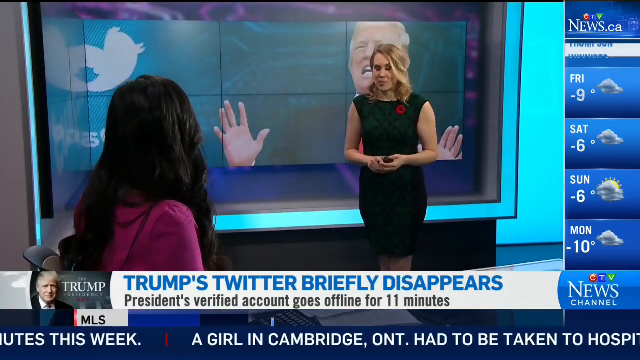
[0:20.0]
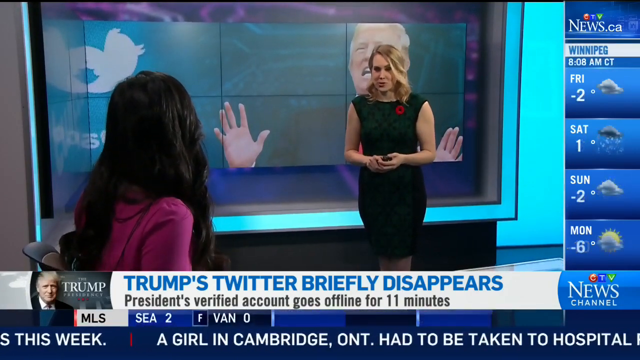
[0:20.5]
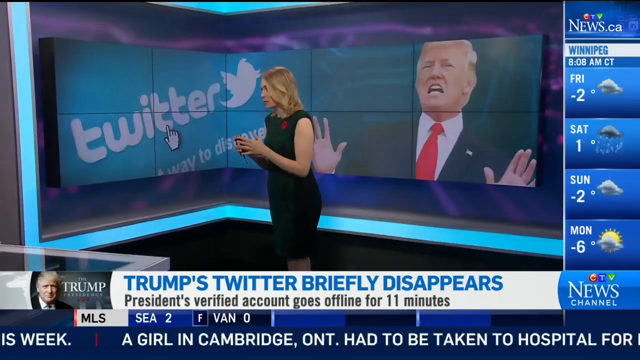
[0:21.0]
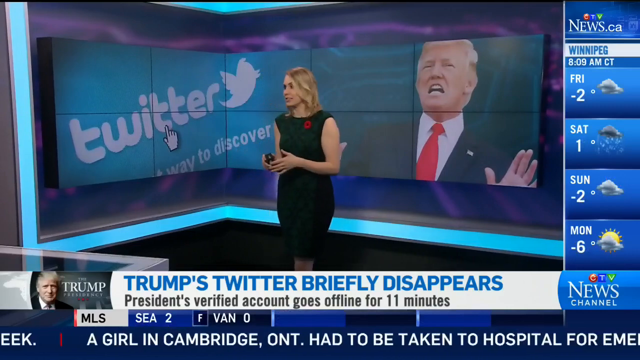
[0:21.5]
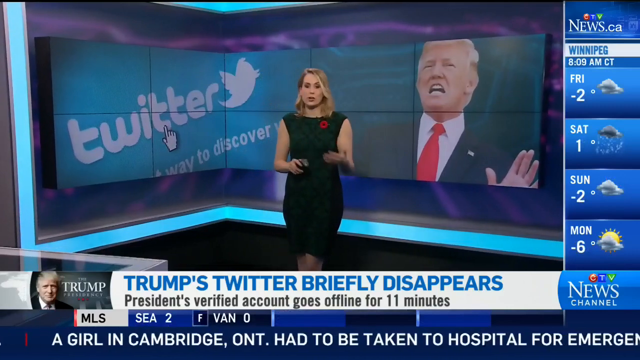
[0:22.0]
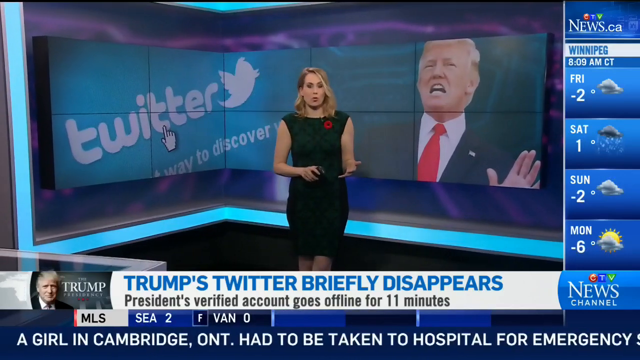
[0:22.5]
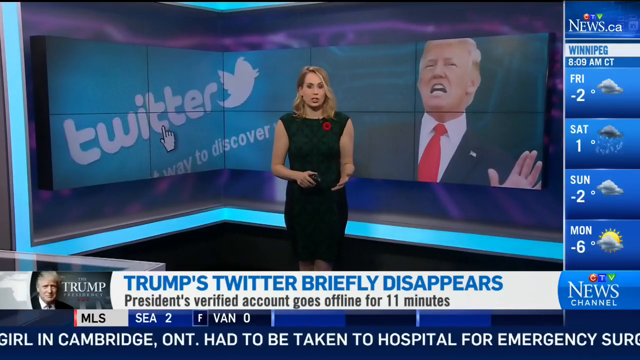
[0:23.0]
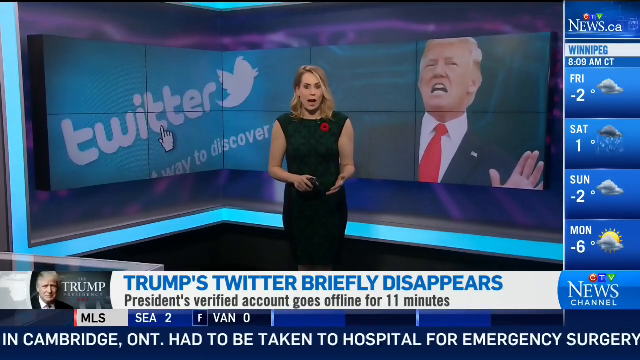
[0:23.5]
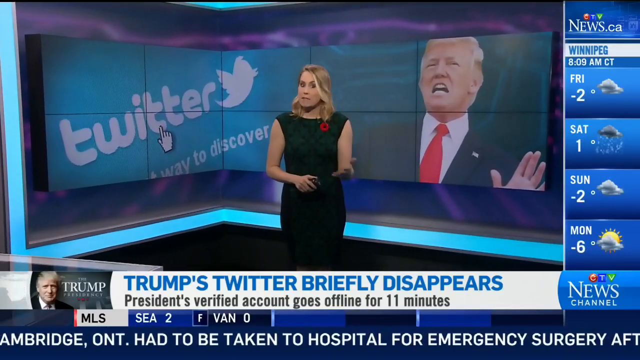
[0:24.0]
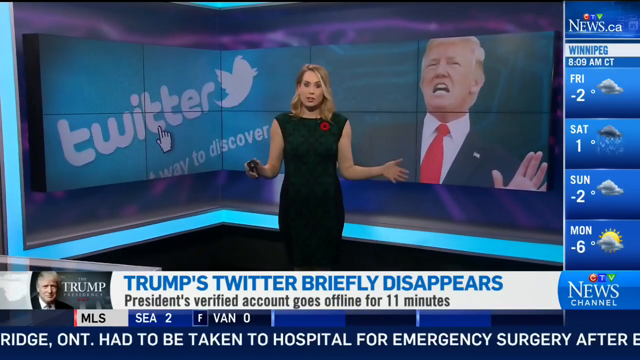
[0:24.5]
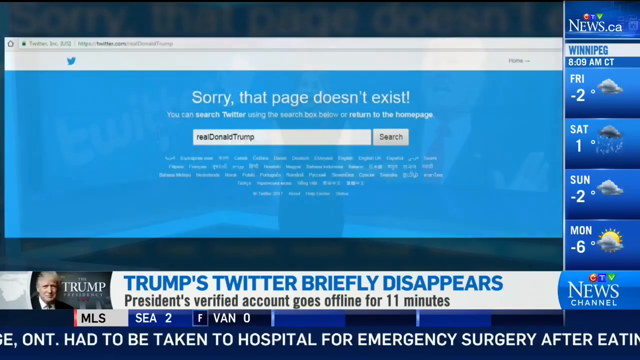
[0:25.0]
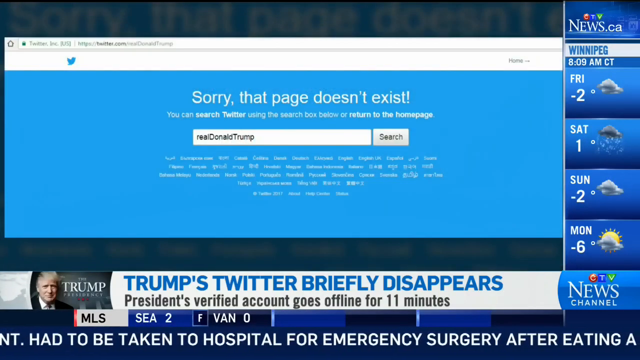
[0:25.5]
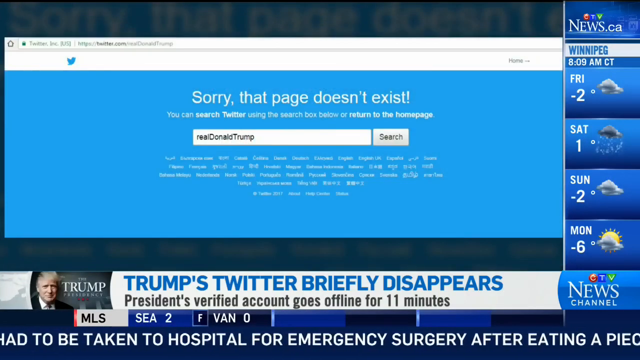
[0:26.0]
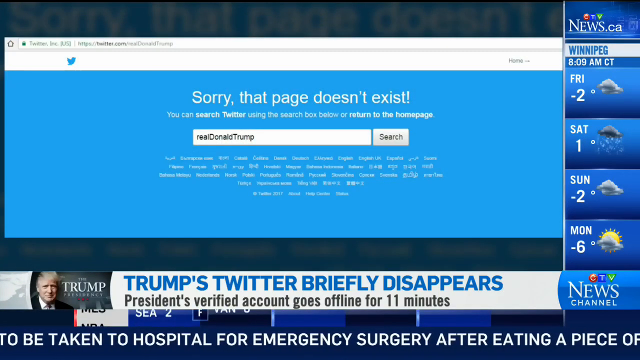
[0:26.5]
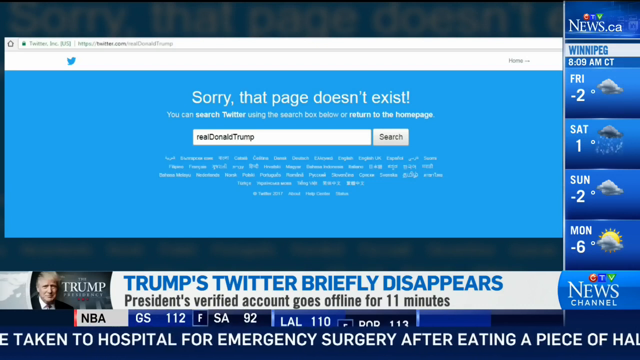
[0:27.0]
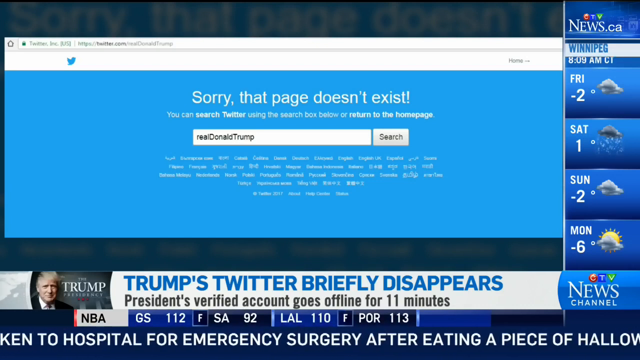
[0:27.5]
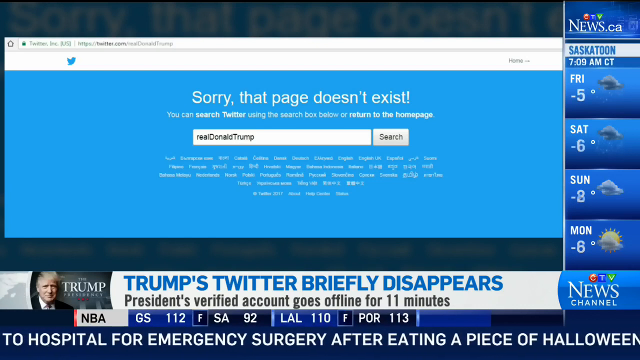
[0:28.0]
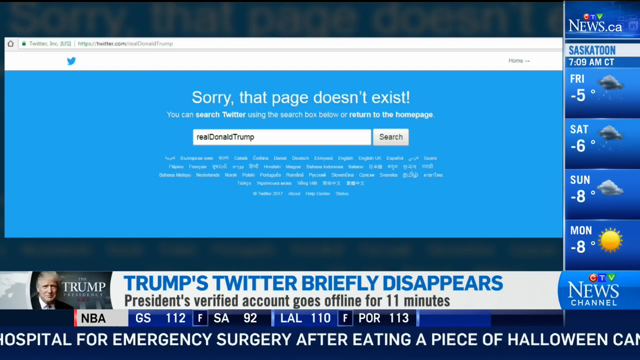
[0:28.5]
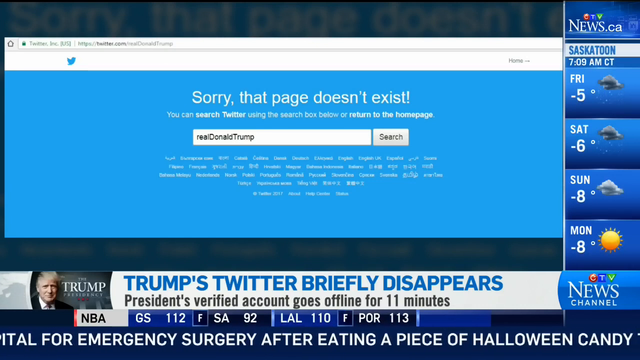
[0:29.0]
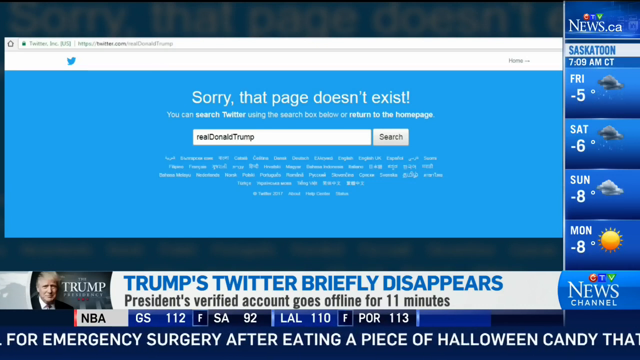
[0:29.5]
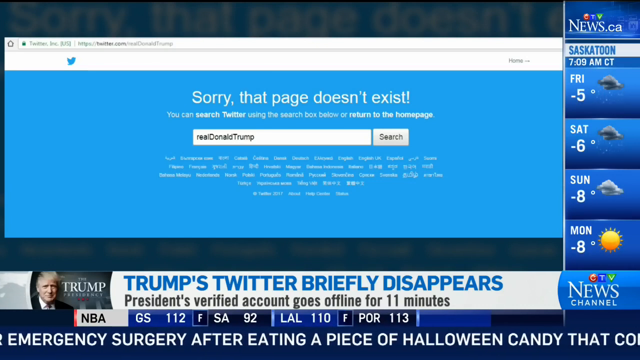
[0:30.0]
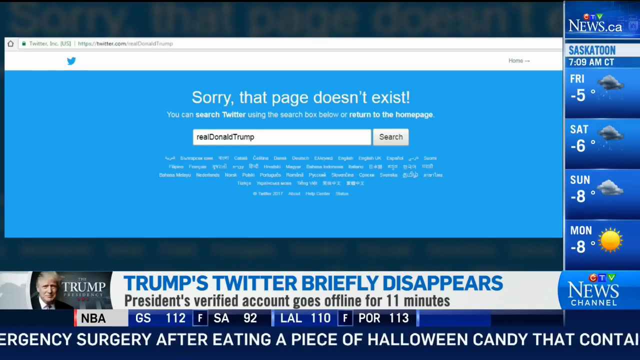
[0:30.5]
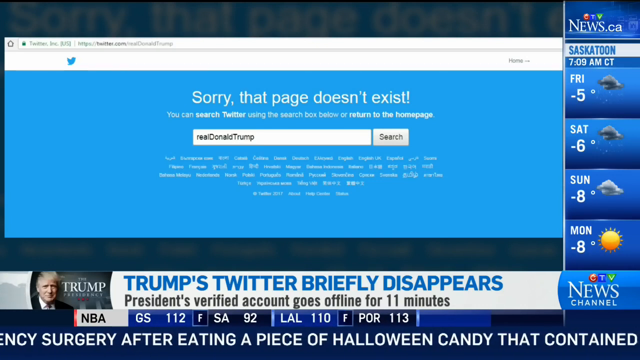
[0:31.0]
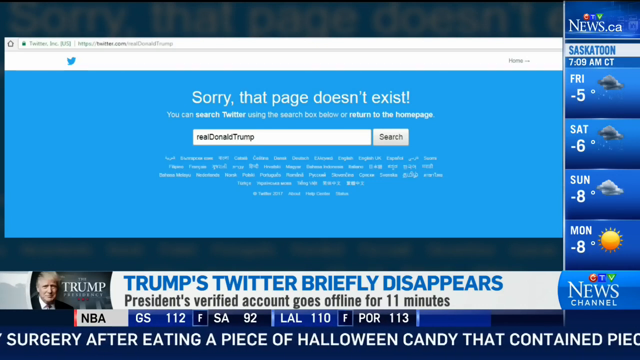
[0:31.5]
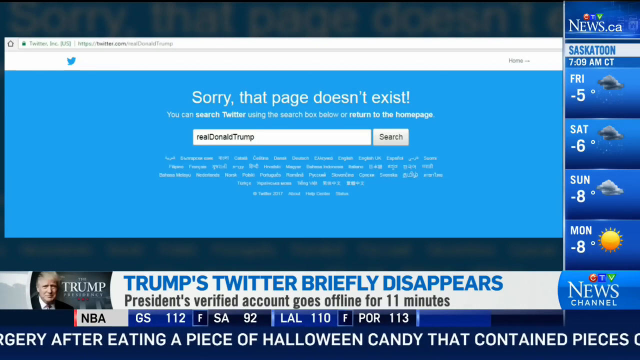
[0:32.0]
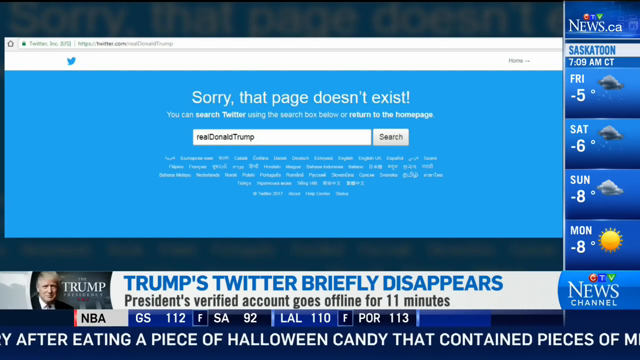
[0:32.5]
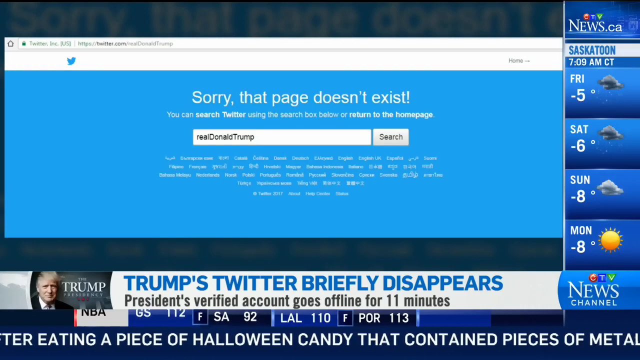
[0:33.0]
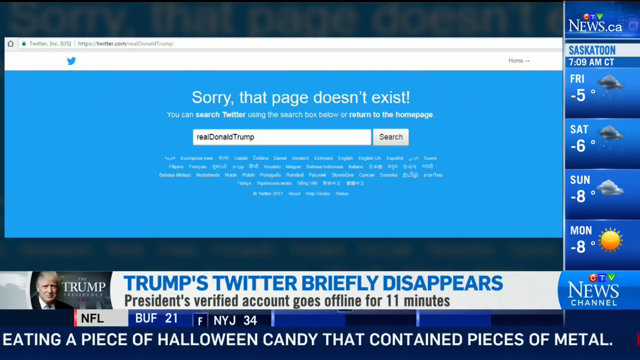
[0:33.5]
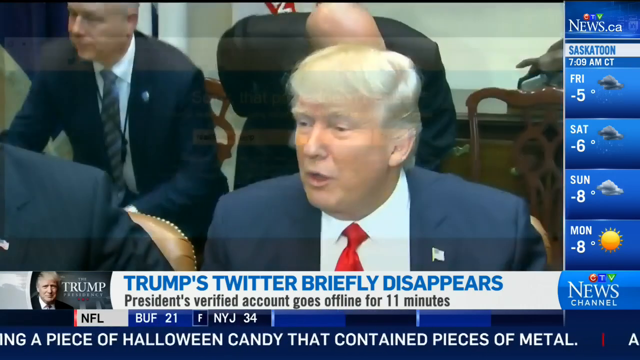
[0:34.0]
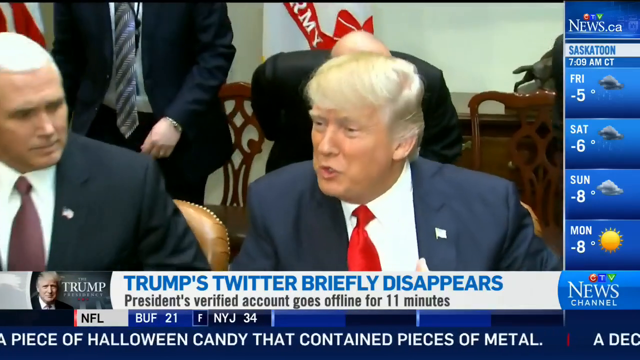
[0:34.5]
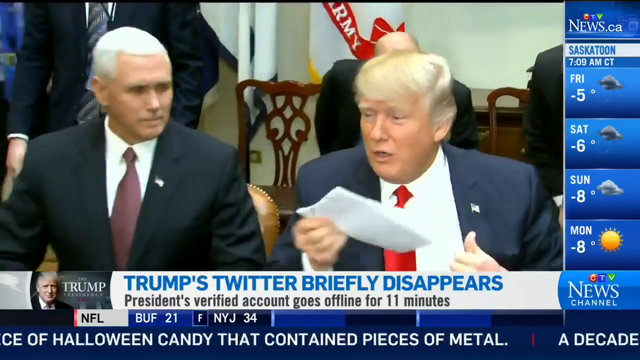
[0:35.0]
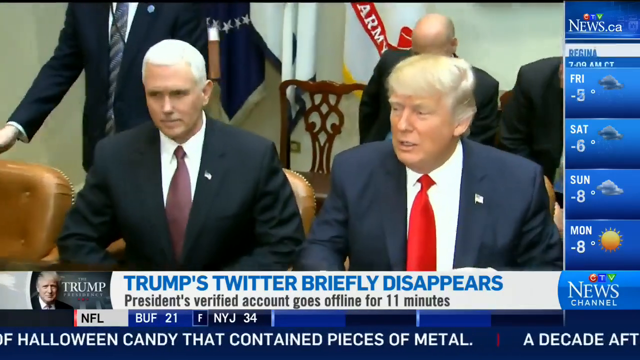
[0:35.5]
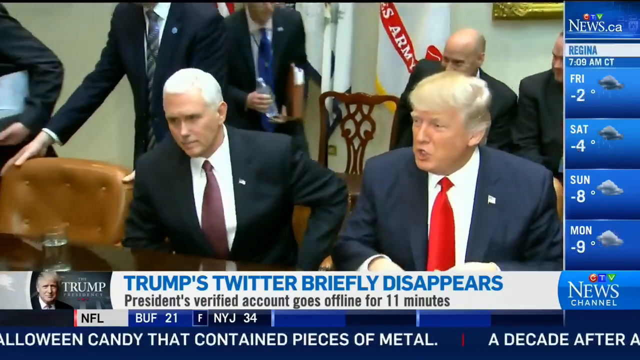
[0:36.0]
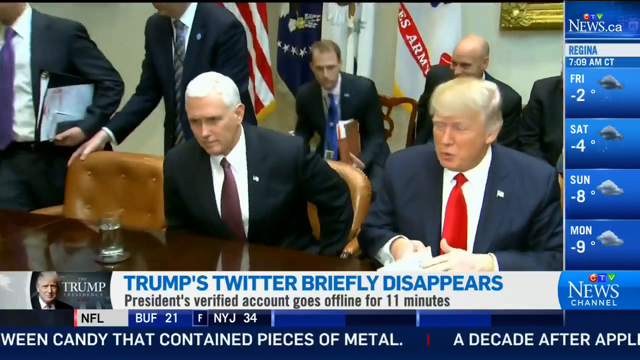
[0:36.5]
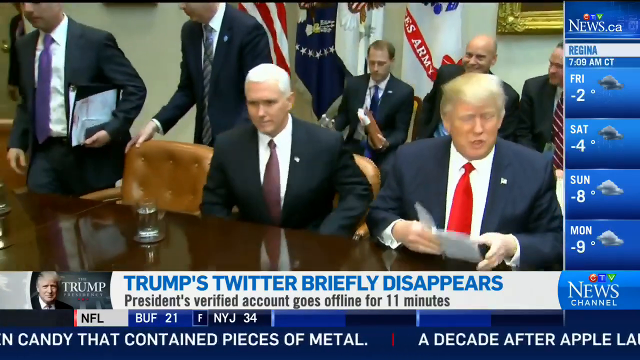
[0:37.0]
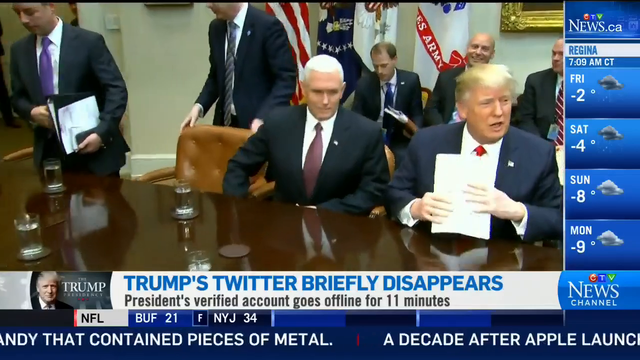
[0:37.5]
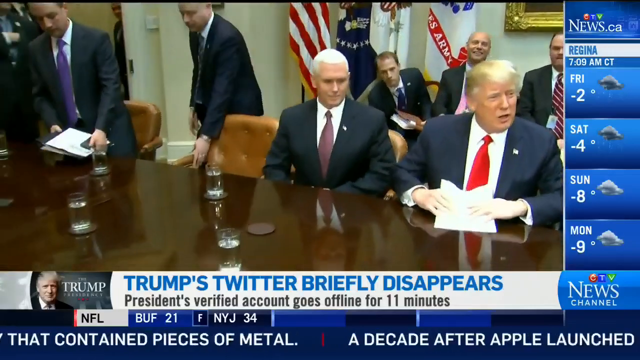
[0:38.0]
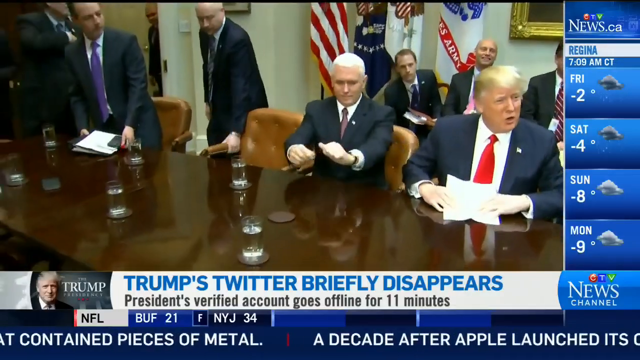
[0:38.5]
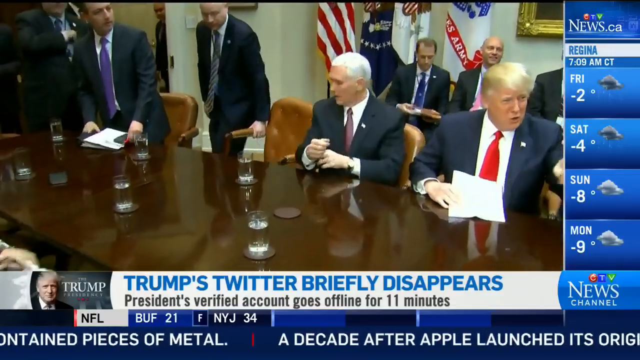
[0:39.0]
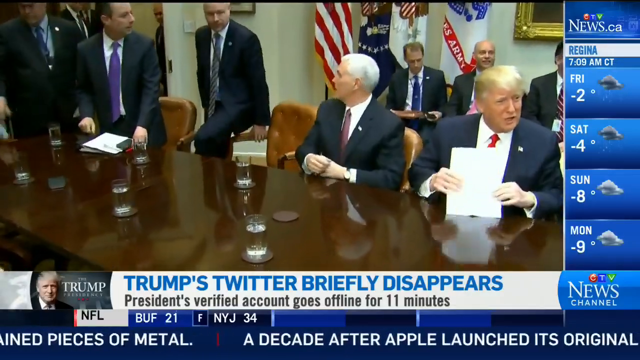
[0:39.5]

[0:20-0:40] The second reporter stands in front of the large display of Donald Trump and Twitter. She has medium-length, loosely wavy blonde hair and appears to be wearing a sleeveless black dress, though it may have something green about it. She looks young, apparently no older than her early 30s, and is seen only briefly. The video then shows a Twitter screen reading "sorry, that page doesn't exist," apparently the result of searching for Donald Trump on Twitter, on the old Twitter's blue background. The same headline stays at the bottom of the screen, which now also shows NBA and NFL scores. The video then cuts to Donald Trump and former Vice President Mike Pence in a room with other people around them. Both sit at a long, medium-brown wooden table. The location is unclear, possibly the White House or somewhere else. The room is full of other men, all in suits, and the American flag and a couple of other flags are in the background. They appear to be getting ready for some kind of sit-down meeting.